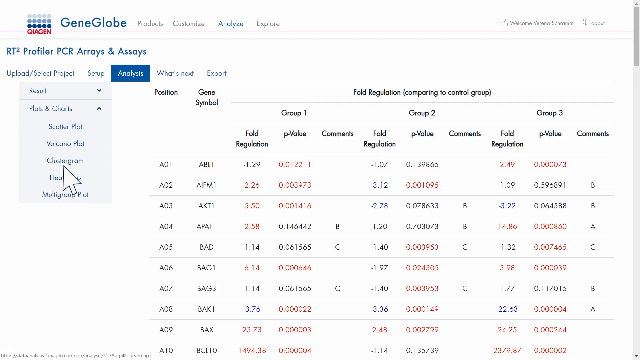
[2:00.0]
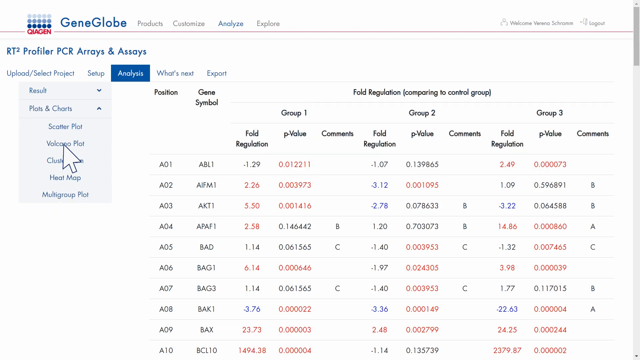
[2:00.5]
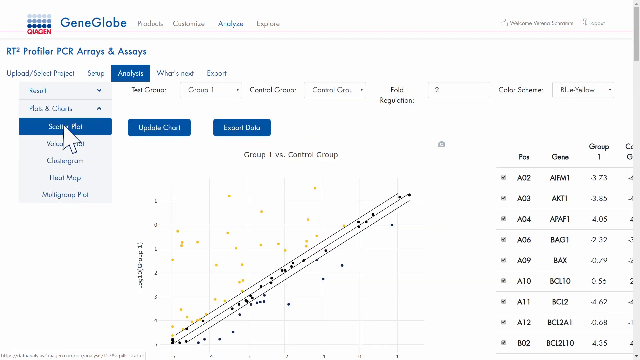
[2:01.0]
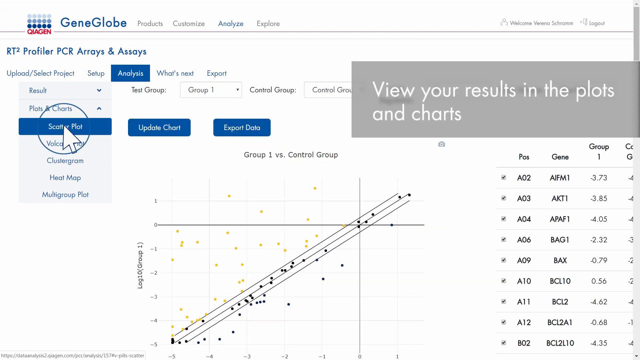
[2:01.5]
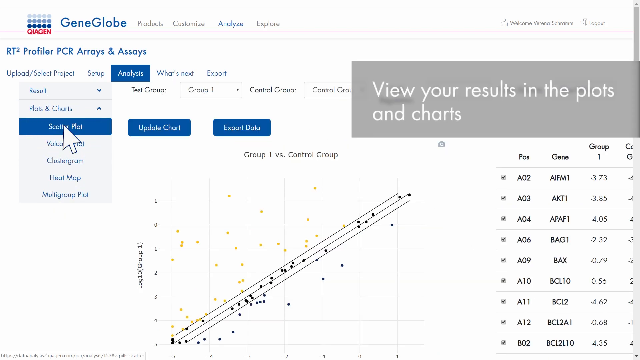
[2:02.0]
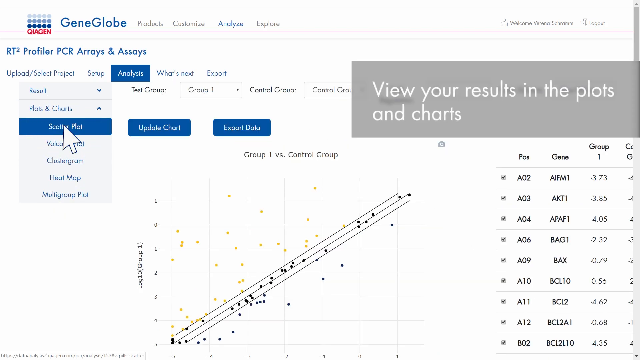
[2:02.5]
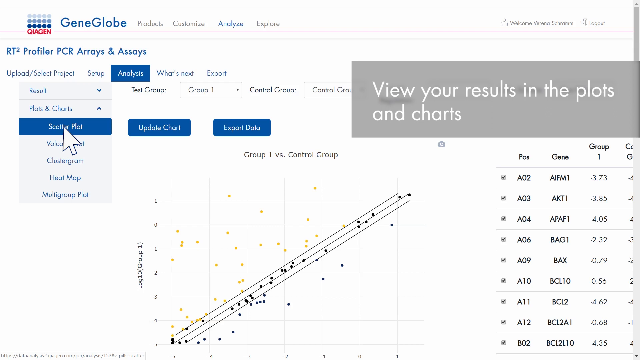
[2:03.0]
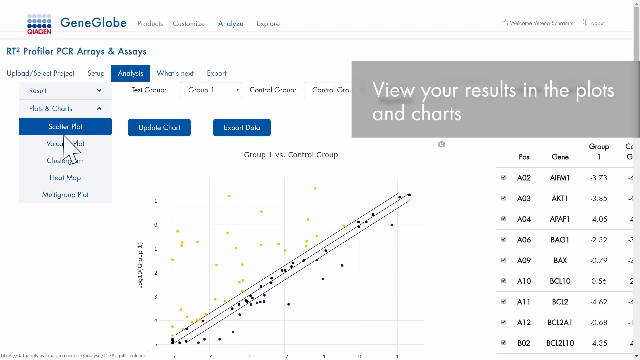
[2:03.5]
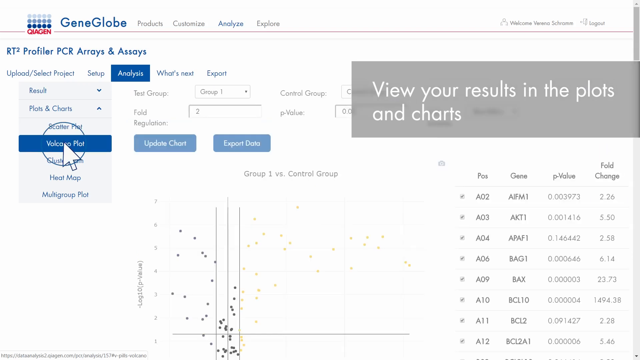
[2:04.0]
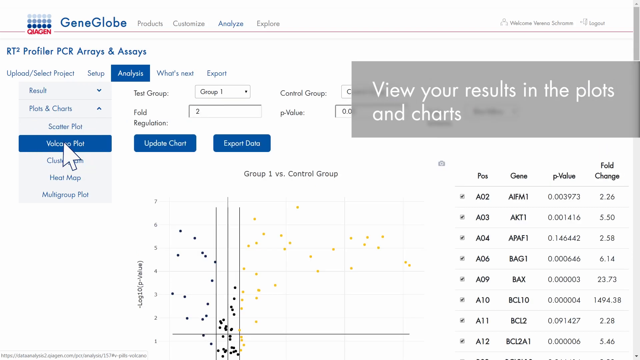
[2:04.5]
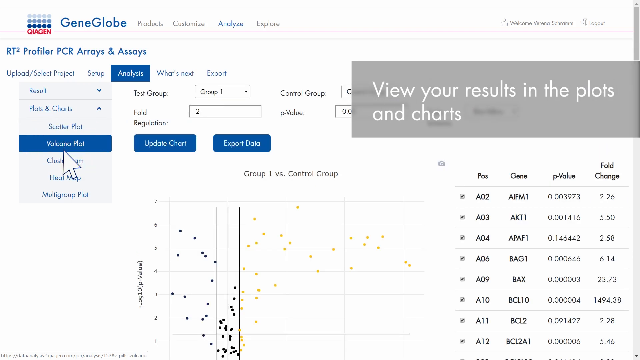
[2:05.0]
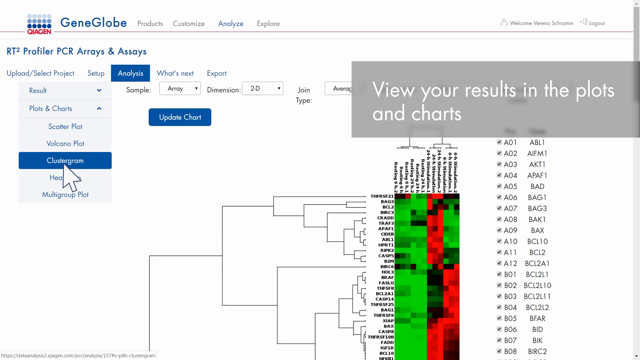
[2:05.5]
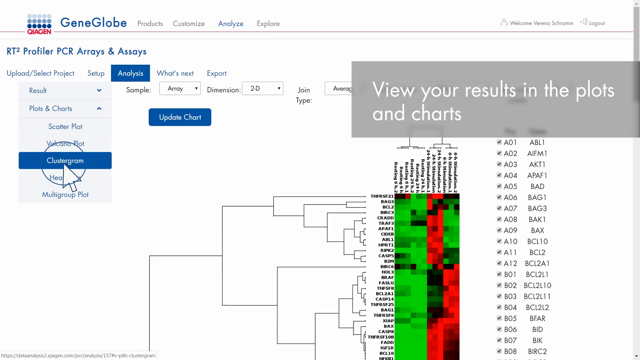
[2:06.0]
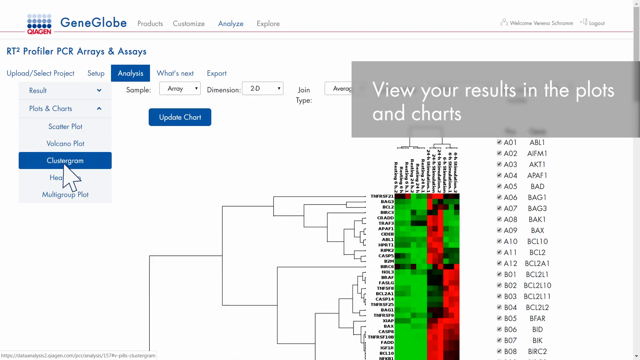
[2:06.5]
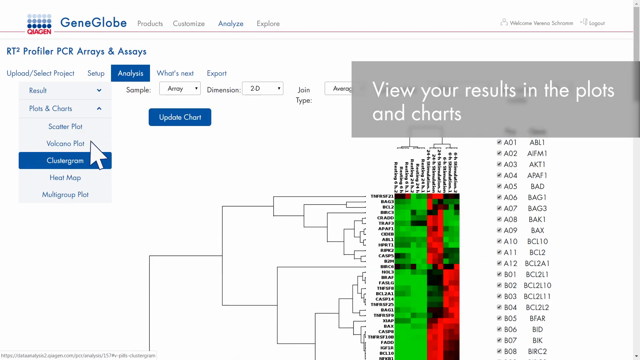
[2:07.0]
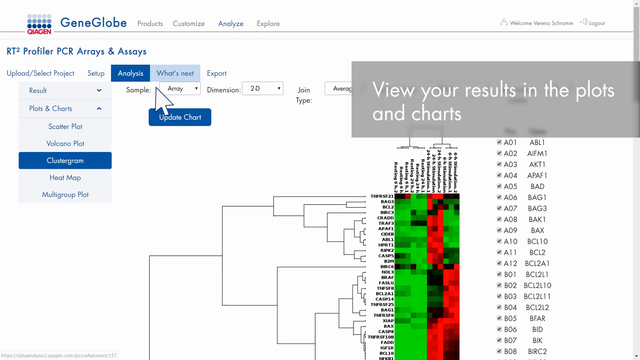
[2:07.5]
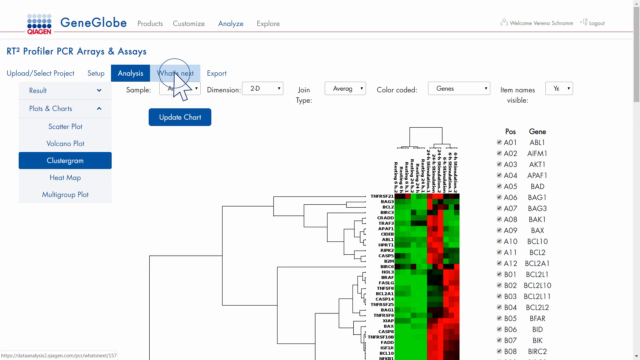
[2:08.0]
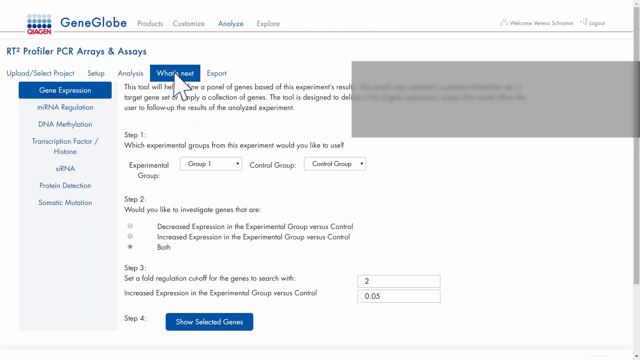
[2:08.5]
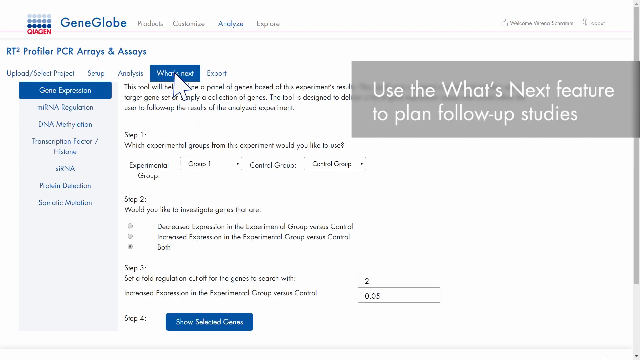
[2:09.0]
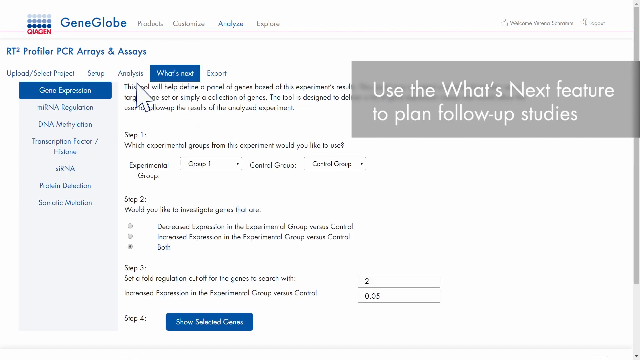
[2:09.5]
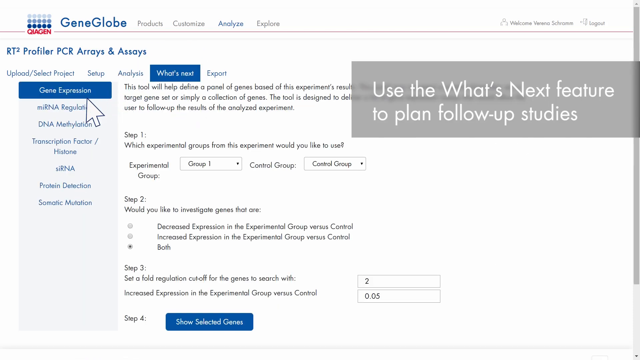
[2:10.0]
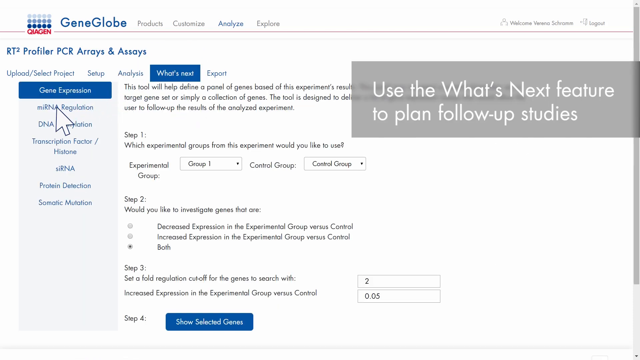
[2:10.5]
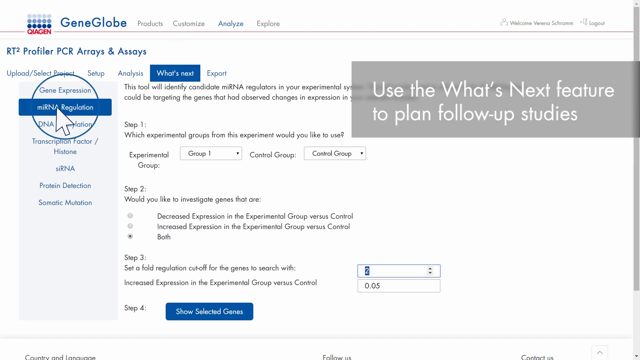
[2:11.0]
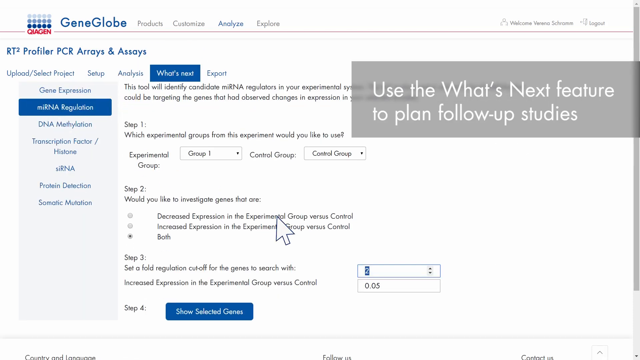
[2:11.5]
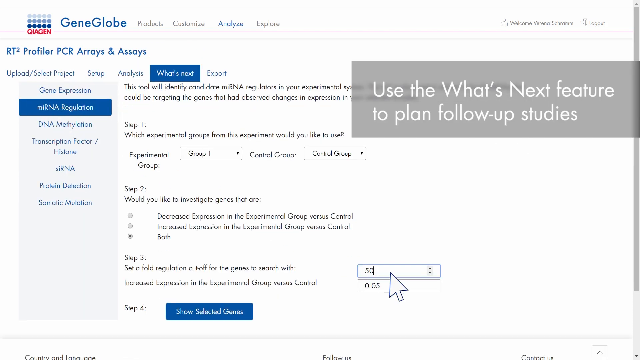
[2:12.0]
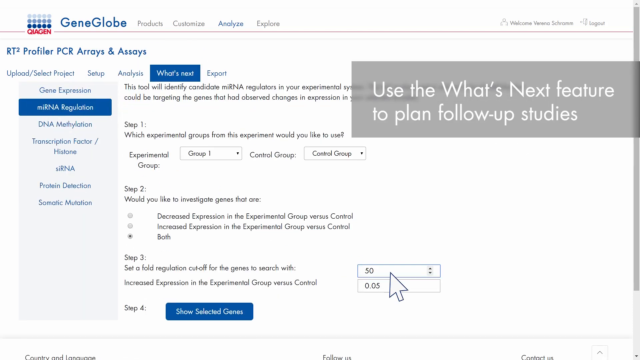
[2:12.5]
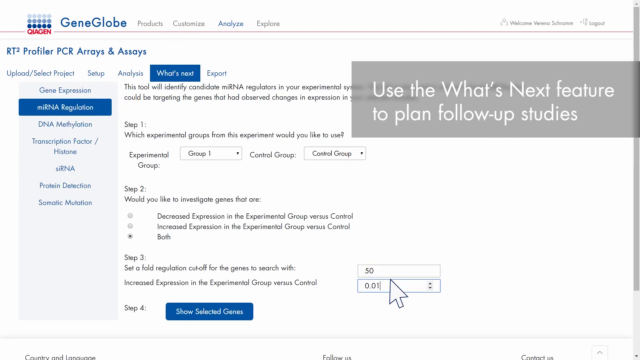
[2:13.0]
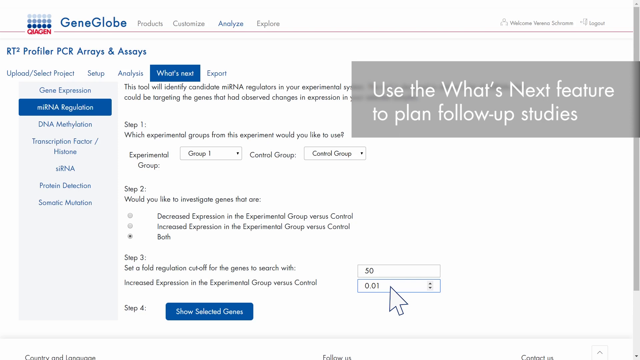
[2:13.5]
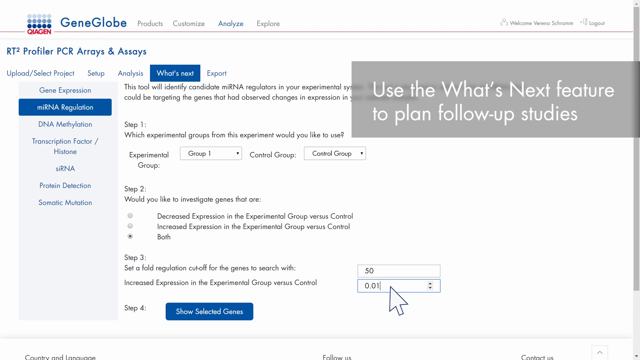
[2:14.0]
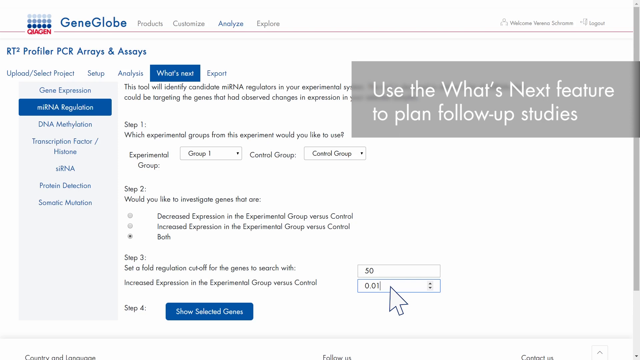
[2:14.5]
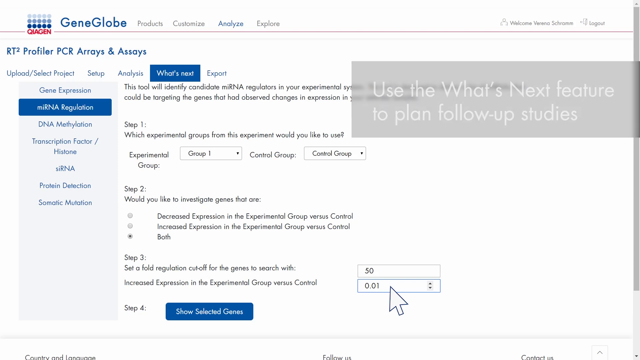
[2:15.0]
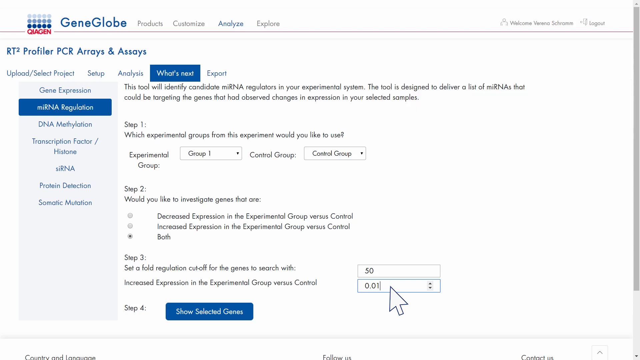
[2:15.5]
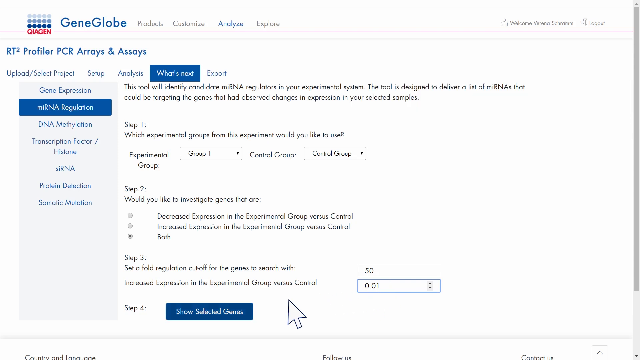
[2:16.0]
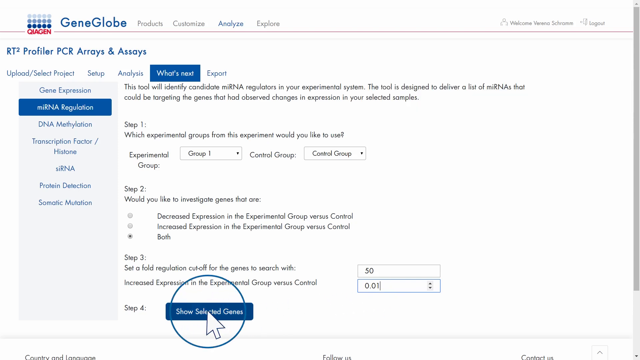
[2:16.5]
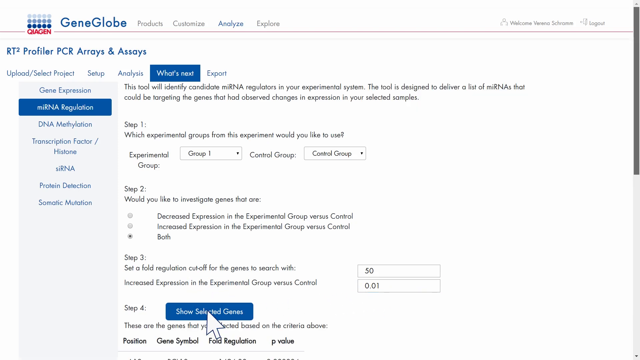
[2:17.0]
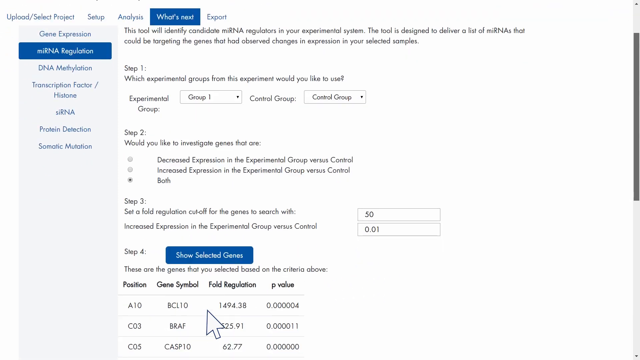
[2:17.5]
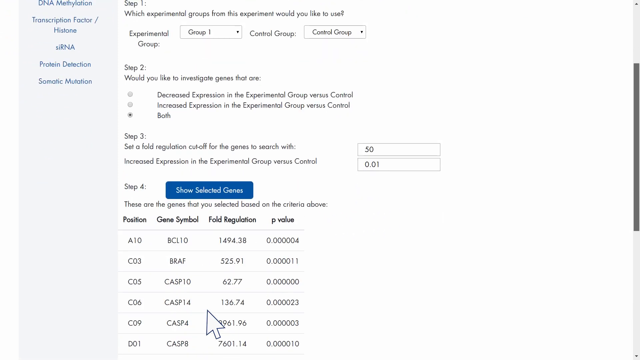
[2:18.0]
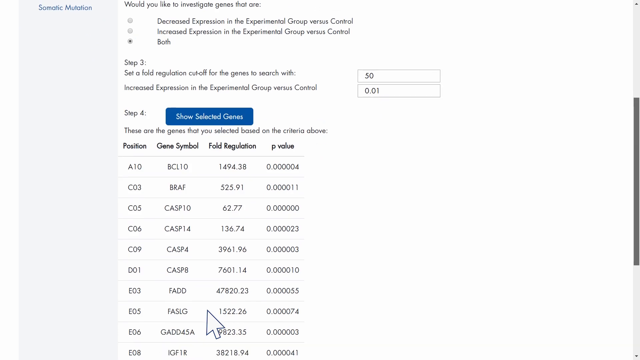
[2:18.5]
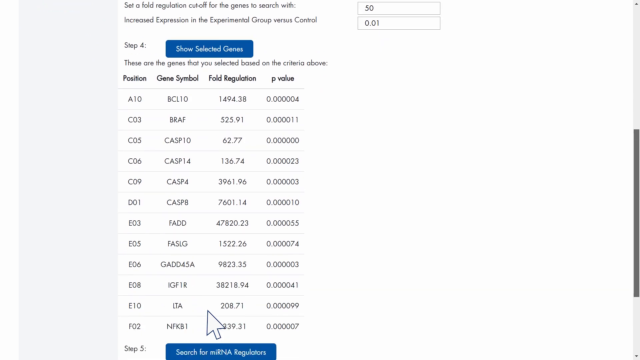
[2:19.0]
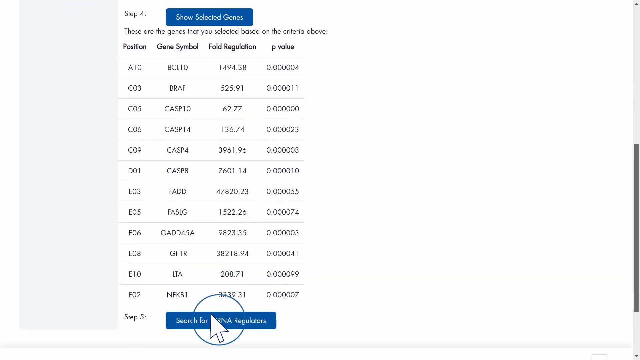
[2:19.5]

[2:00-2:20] The pointer continues hovering on the GeniGlobe website. A scatter plot is selected, showing "update chart" and "export data" options. The volcano plot is opened, then the clustergram. On the clustergram, what's next is selected, showing gene expression, mRNA regulation, DNA methylation, transcription factor and histone. The fold regulation cutoff value for the genes to be searched is changed to 50, and show selected genes is selected. The page is scrolled down through all the genes, and something at the bottom of the page is selected. Other options on the clustergram page include heat map and multi-group plot. A massive chart shows green and red colors with labels starting AO1, AO2 and continuing onward. Text on the top right of the page says "view your results in the plots and charts".